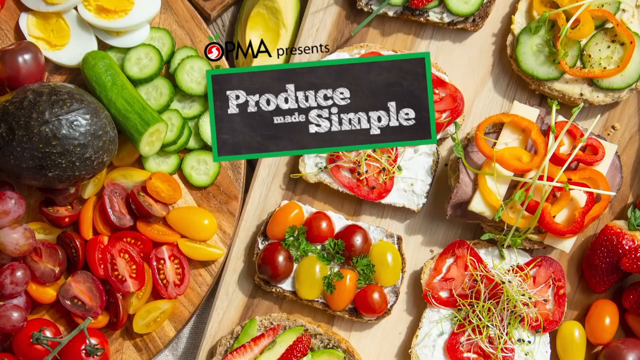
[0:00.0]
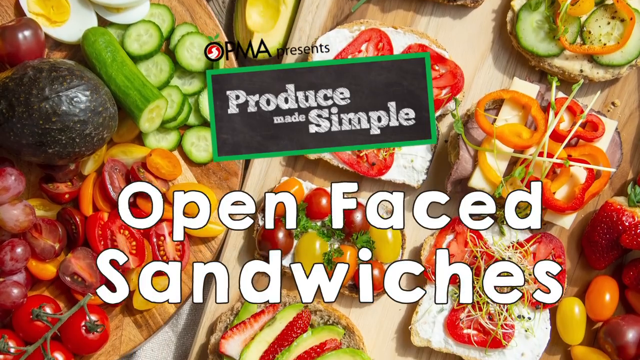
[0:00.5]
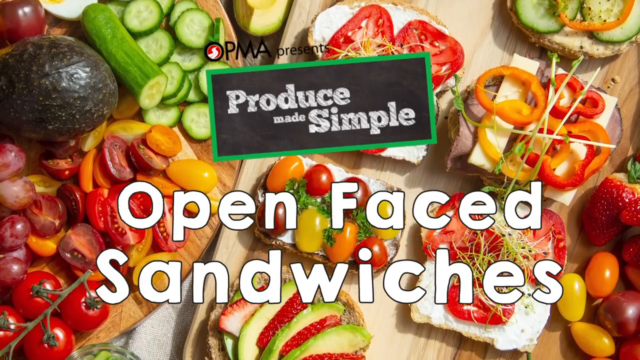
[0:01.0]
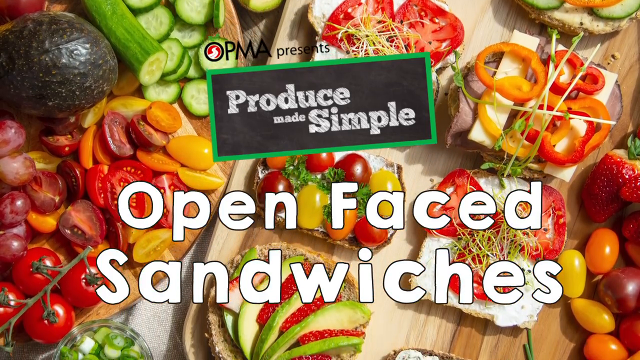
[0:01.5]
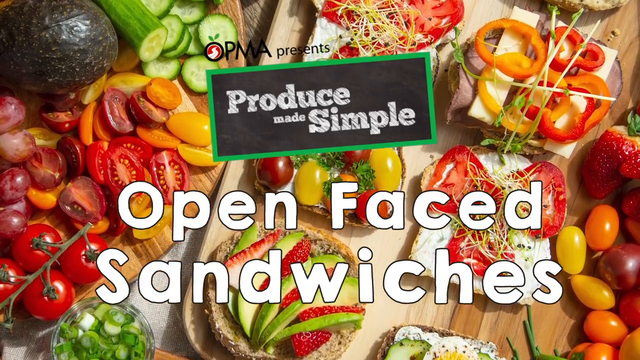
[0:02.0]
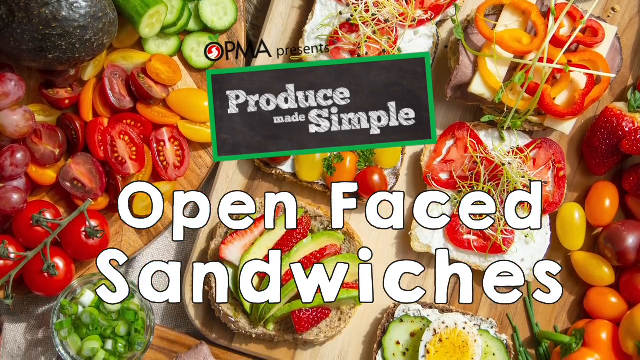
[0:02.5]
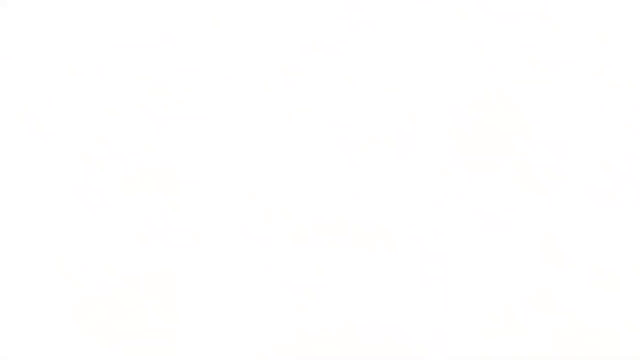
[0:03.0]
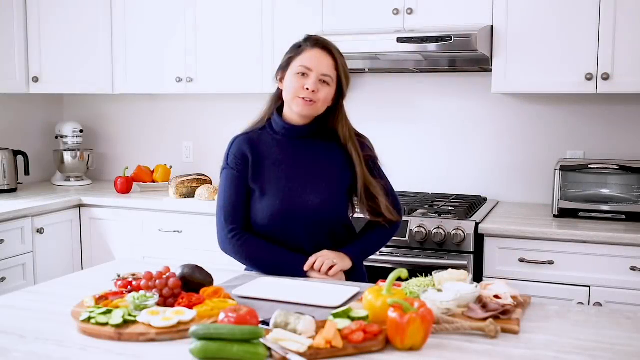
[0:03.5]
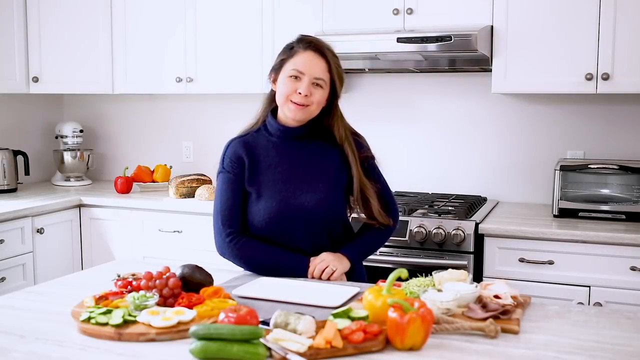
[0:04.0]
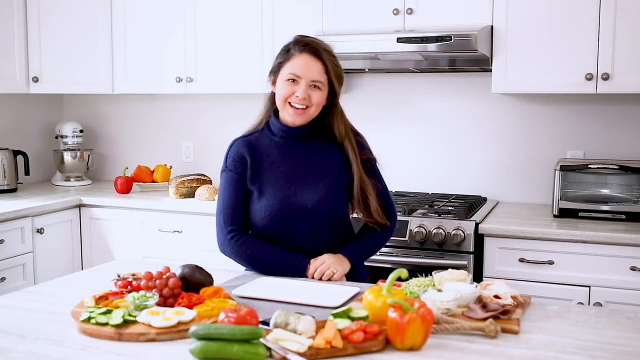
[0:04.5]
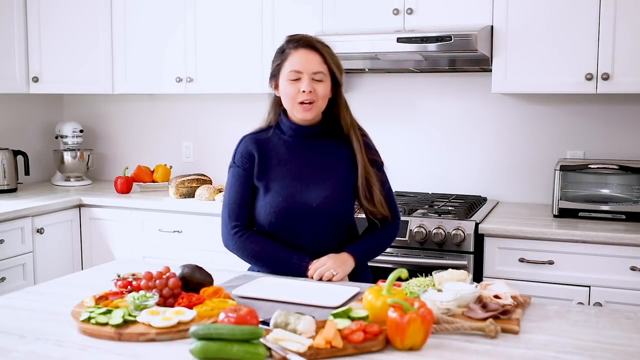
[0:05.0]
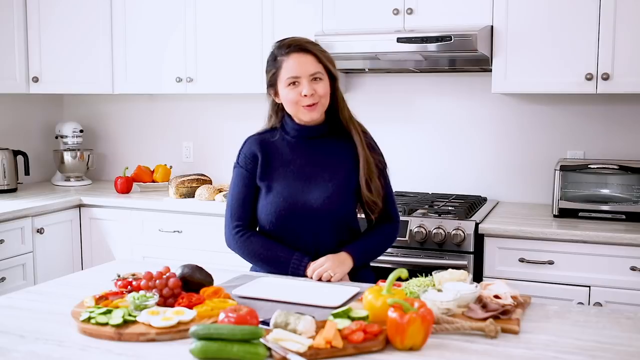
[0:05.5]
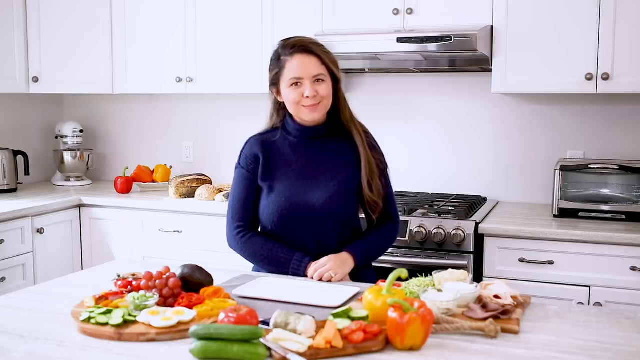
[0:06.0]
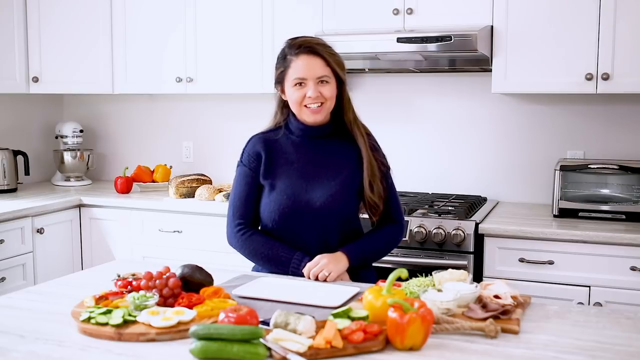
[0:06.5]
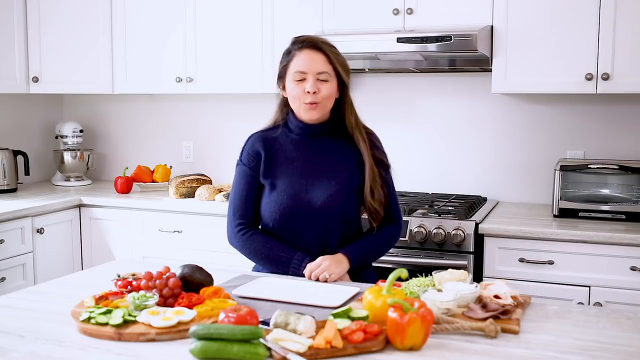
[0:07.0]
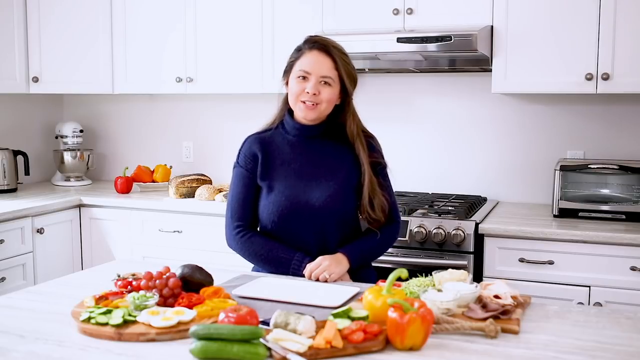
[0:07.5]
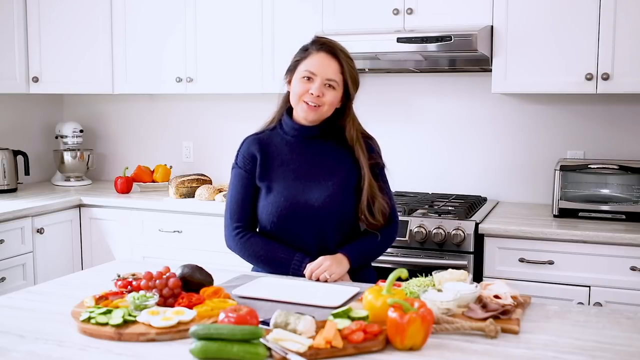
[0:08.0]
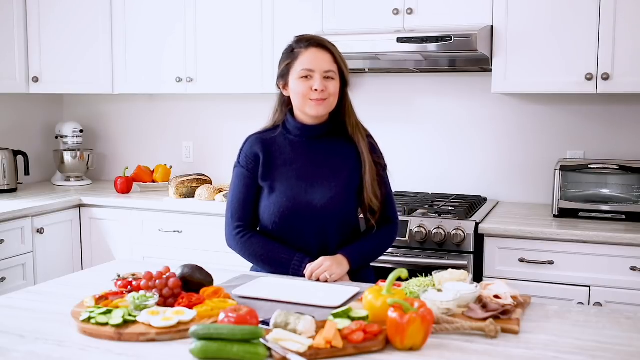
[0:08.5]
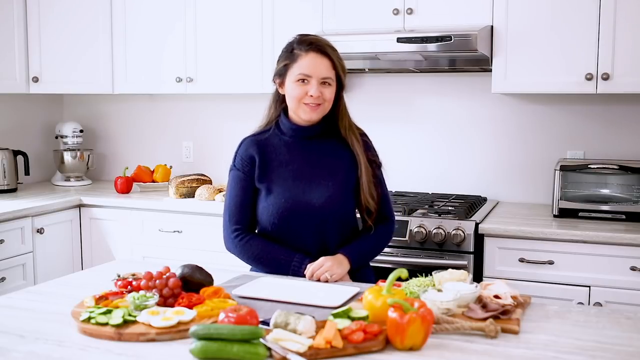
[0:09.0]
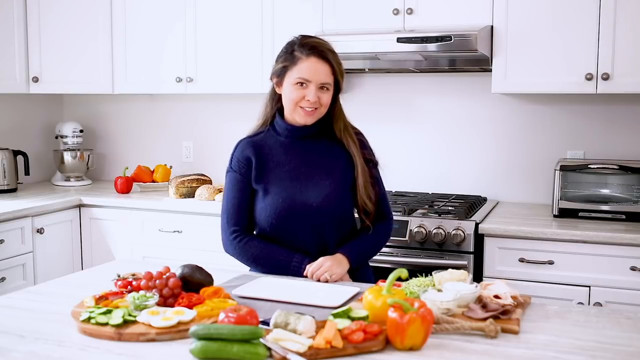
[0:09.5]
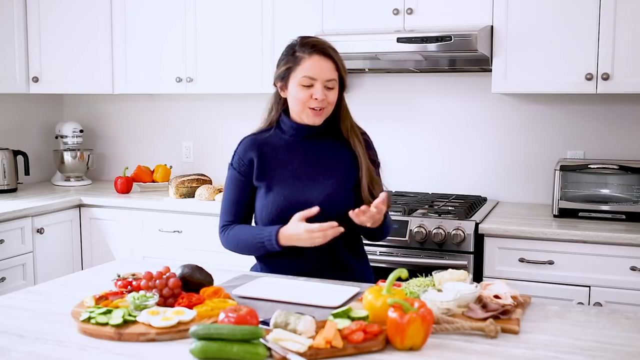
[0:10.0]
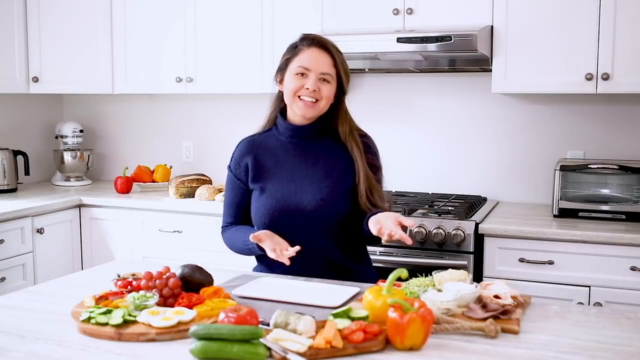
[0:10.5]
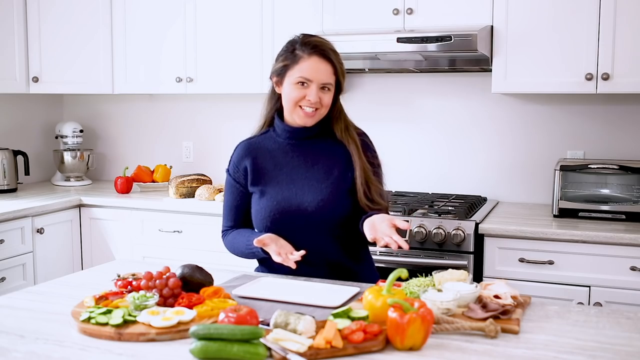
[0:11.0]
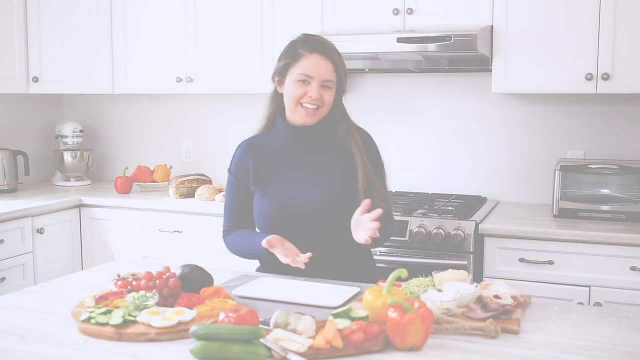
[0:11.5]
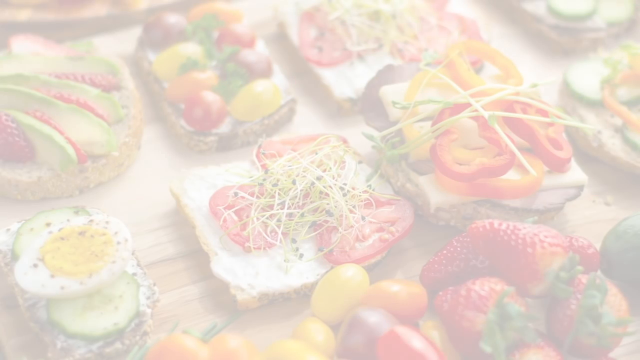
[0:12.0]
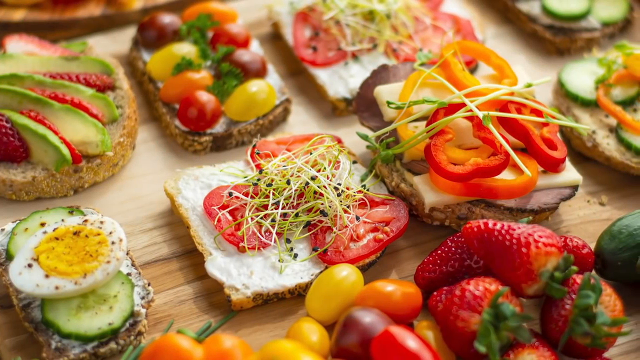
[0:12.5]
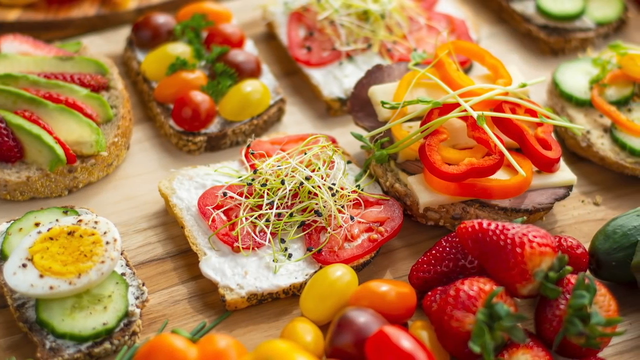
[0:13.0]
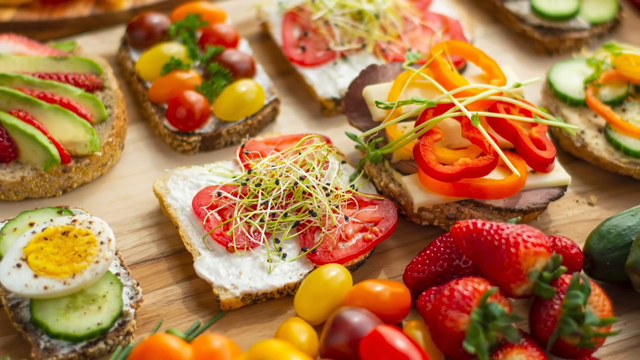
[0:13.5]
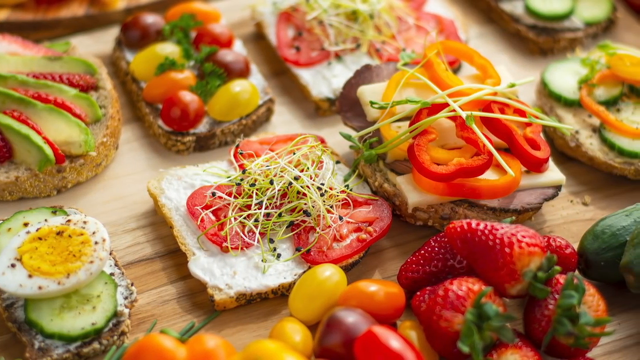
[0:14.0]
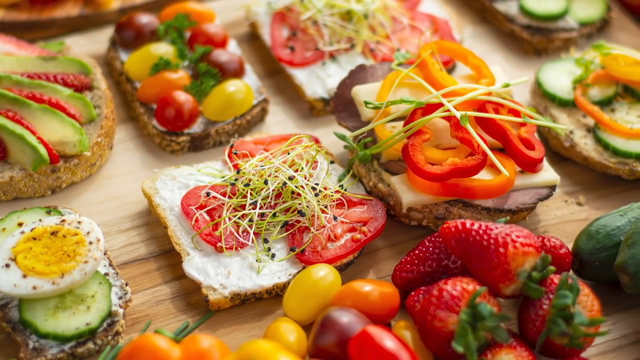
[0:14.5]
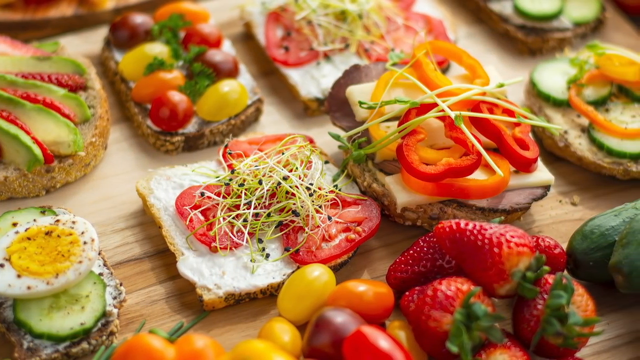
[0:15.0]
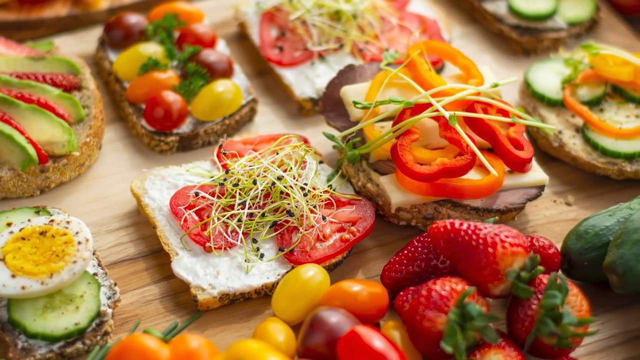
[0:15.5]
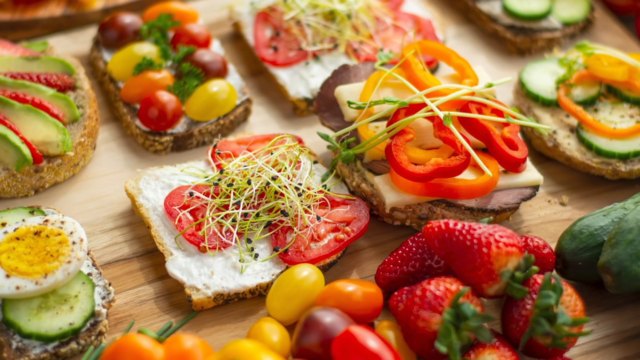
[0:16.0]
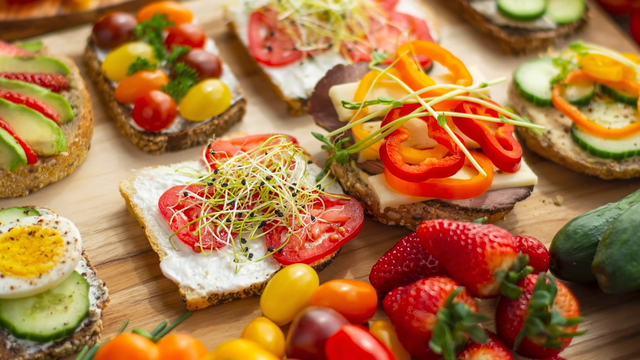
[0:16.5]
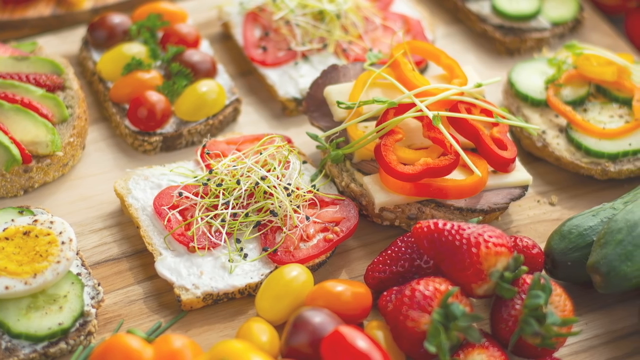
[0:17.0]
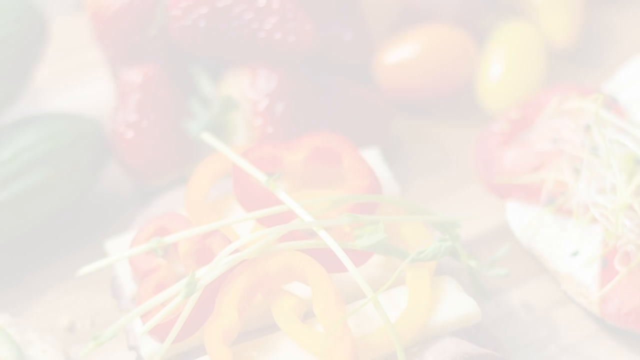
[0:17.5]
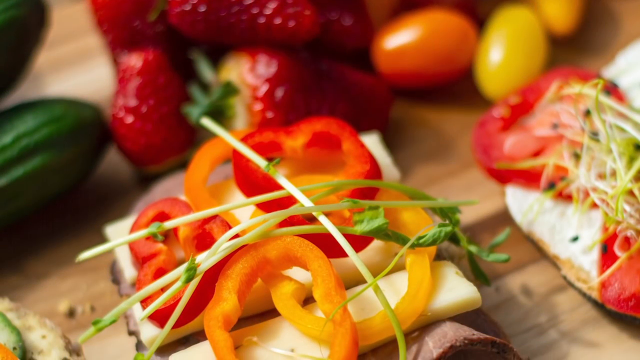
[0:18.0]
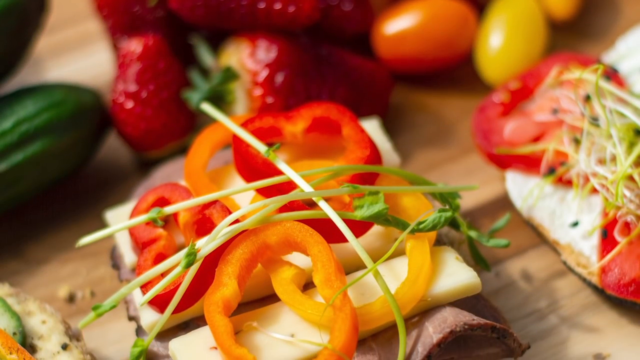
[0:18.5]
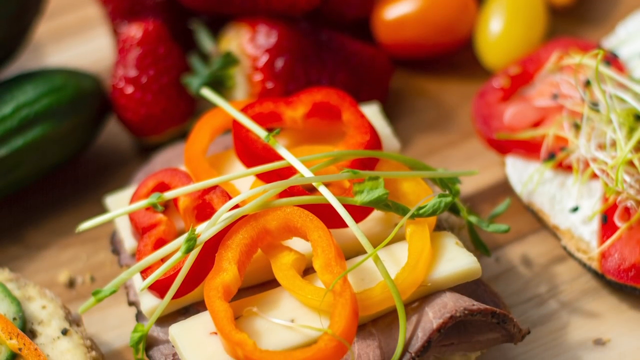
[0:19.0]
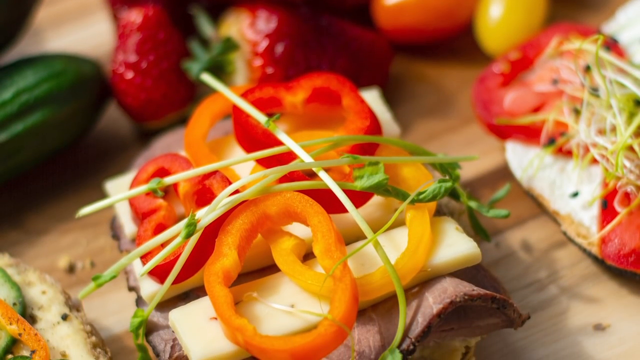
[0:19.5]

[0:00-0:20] The camera moves slowly over several types of chopped fruits on a table, with the inscription "Produce Made Simple open-faced sandwiches" on the screen. The shot then focuses on a middle-aged woman dressed in a pull neck, standing in a kitchen. Behind her there is an oven, a jug, and some fruits on the table. Beside her and in front of her is a chopping board with several ingredients by its side: garlic, tomatoes, onions, avocado, spinach, a great many of them, and some pepper right before her. She is getting ready to make a dish.